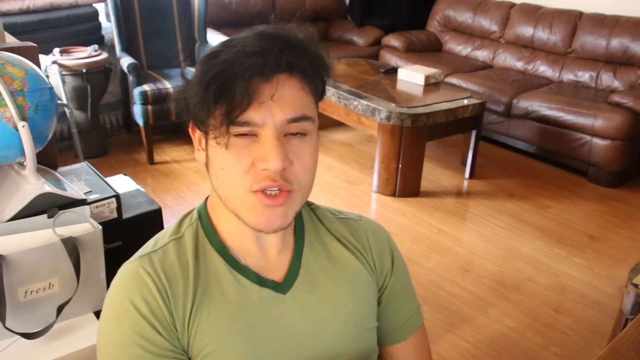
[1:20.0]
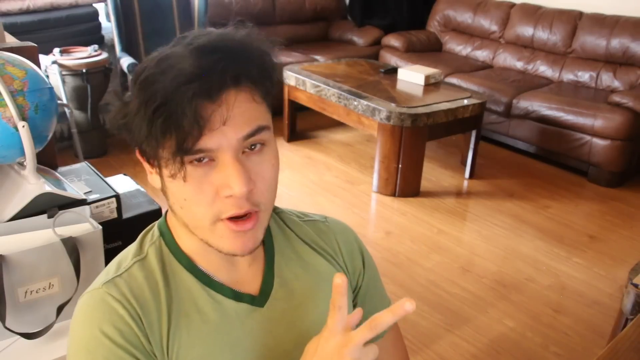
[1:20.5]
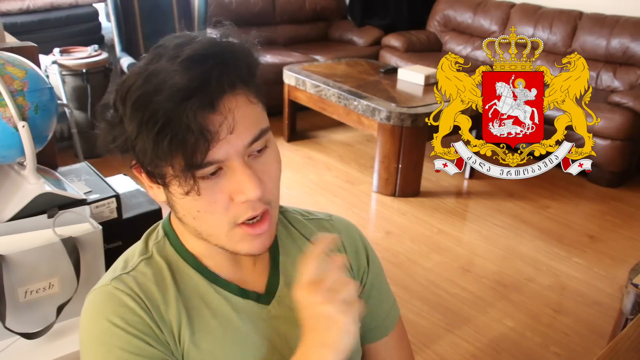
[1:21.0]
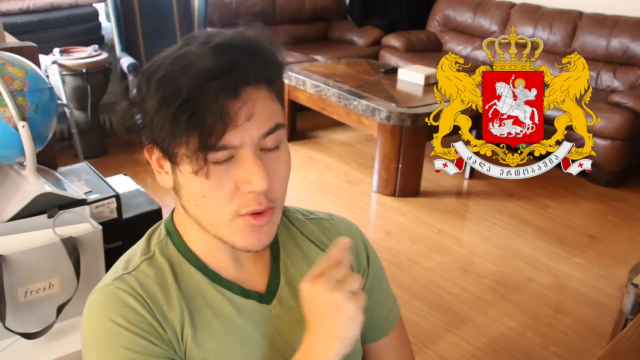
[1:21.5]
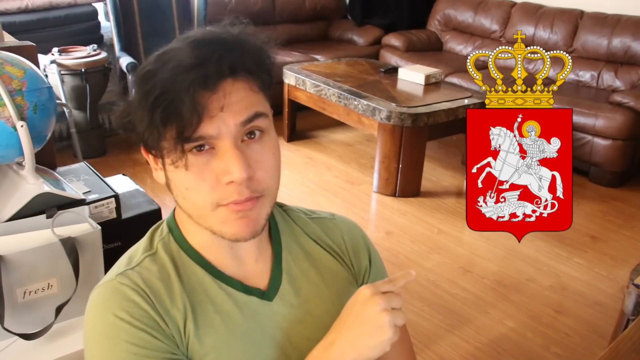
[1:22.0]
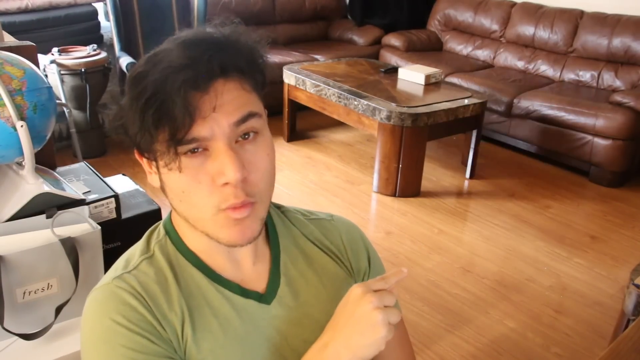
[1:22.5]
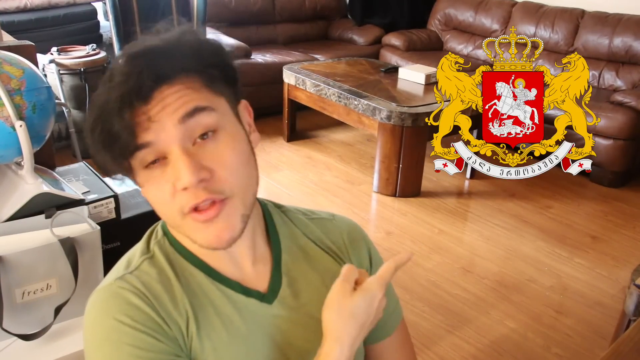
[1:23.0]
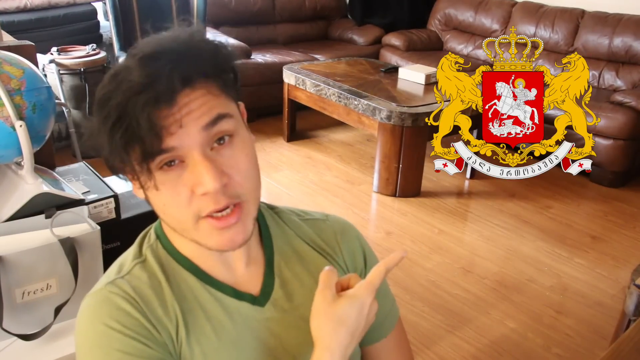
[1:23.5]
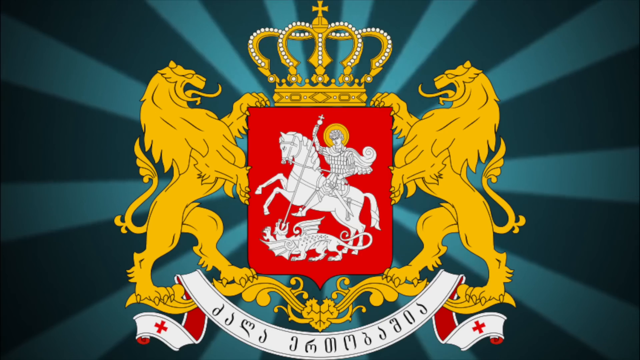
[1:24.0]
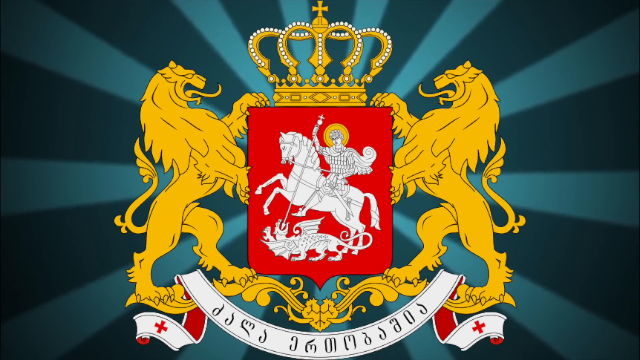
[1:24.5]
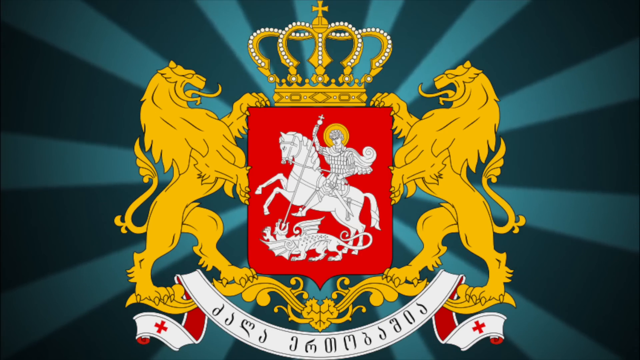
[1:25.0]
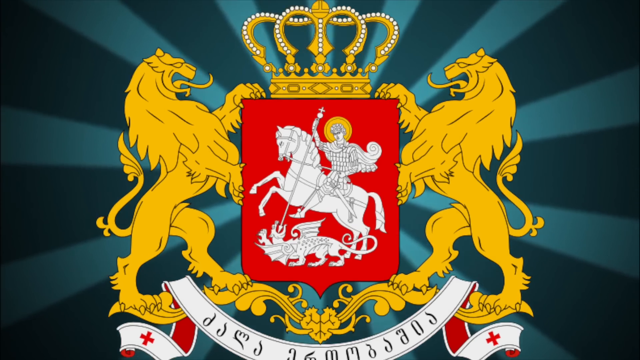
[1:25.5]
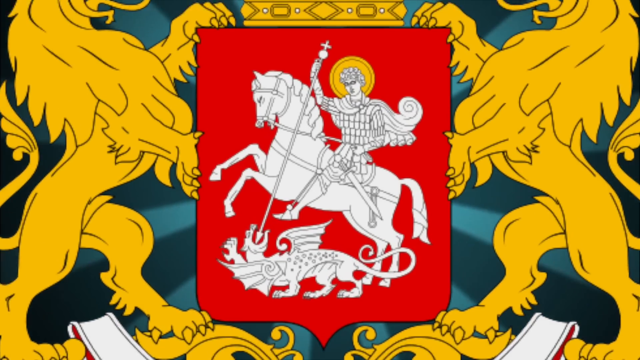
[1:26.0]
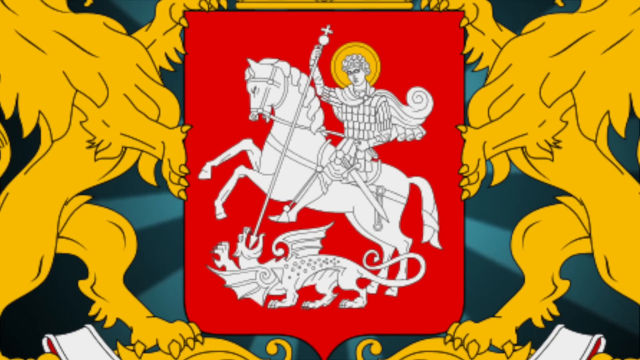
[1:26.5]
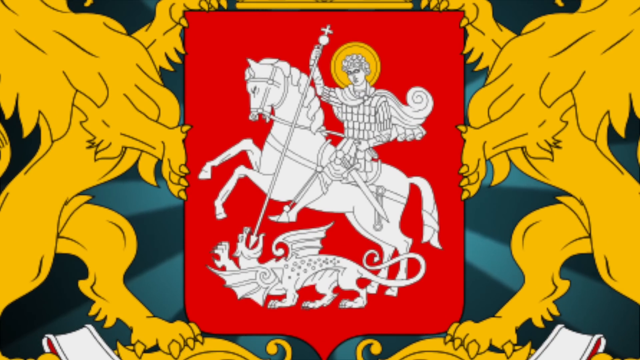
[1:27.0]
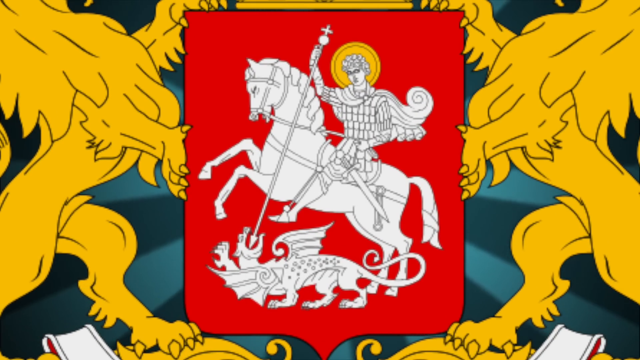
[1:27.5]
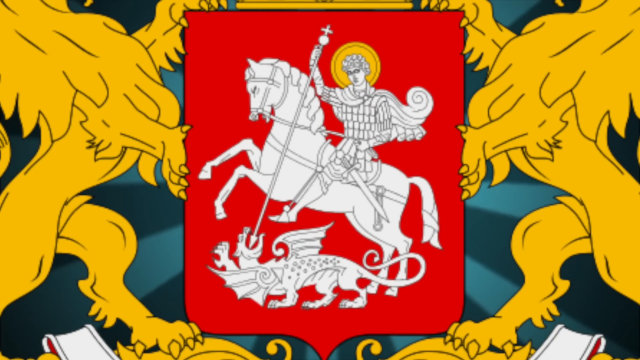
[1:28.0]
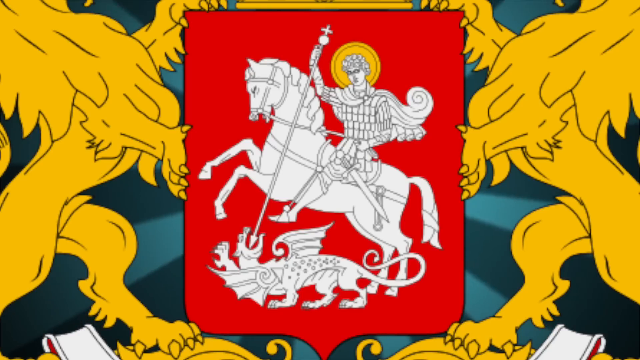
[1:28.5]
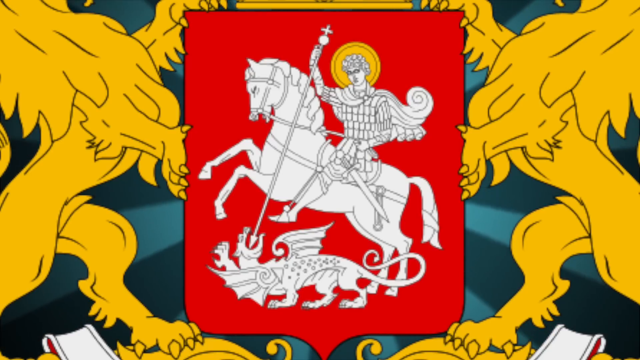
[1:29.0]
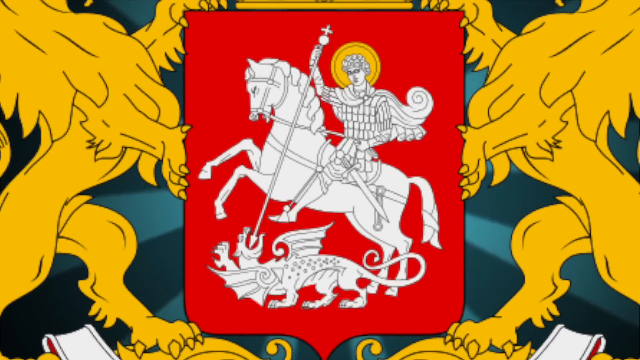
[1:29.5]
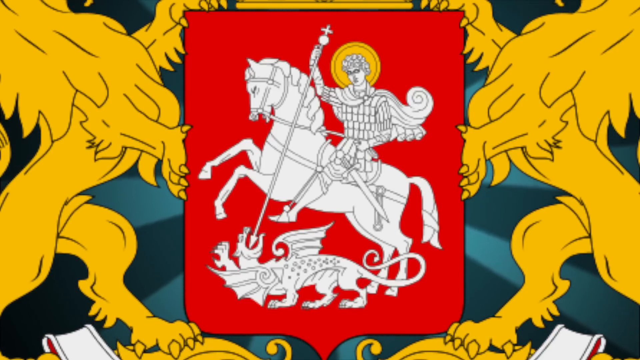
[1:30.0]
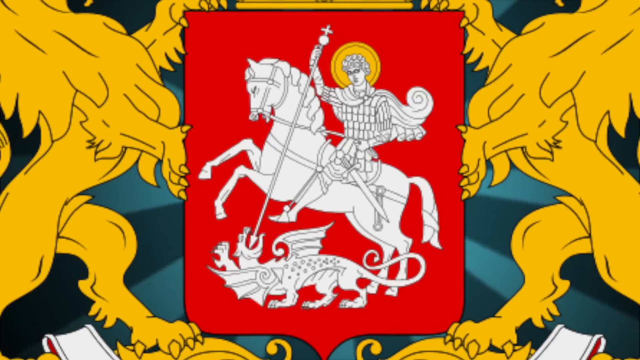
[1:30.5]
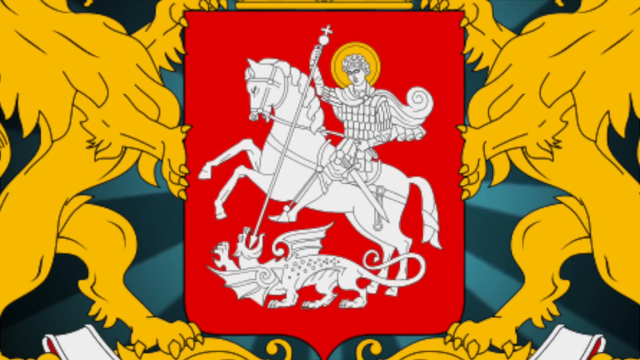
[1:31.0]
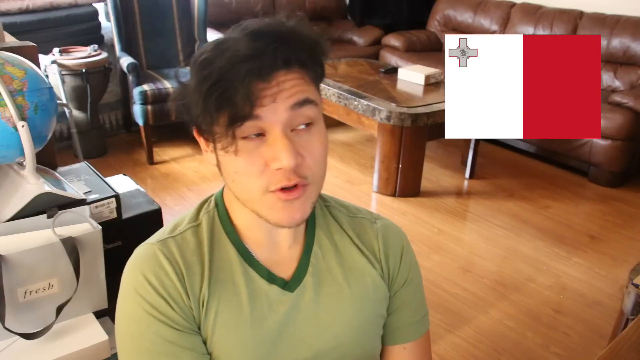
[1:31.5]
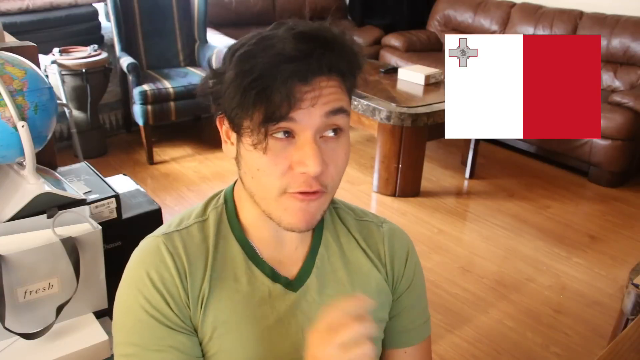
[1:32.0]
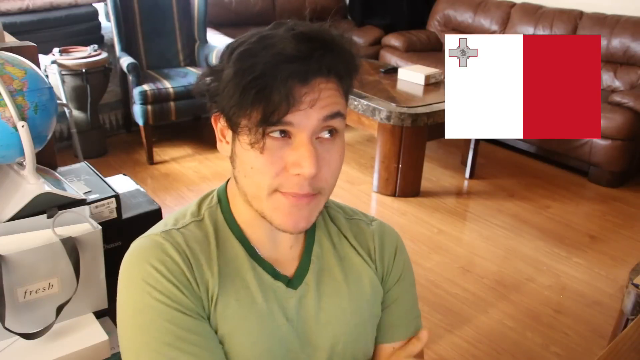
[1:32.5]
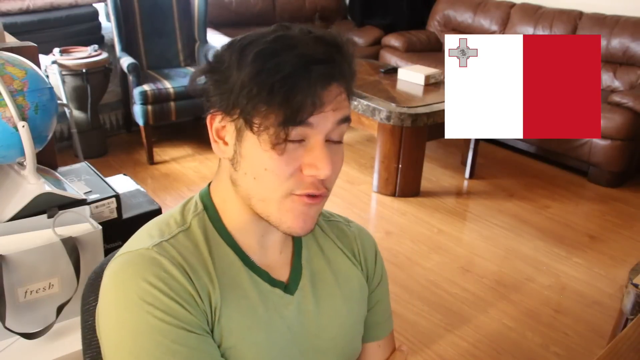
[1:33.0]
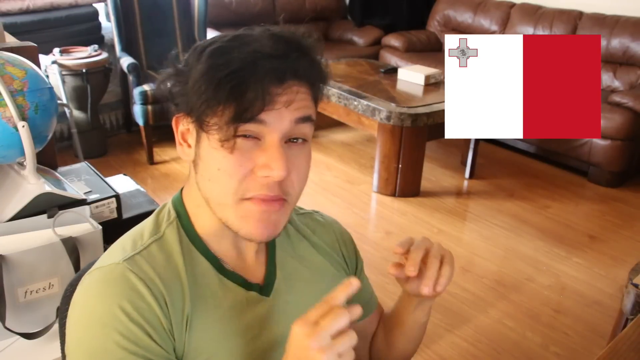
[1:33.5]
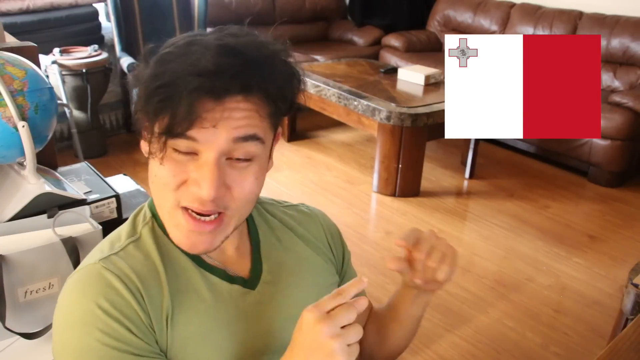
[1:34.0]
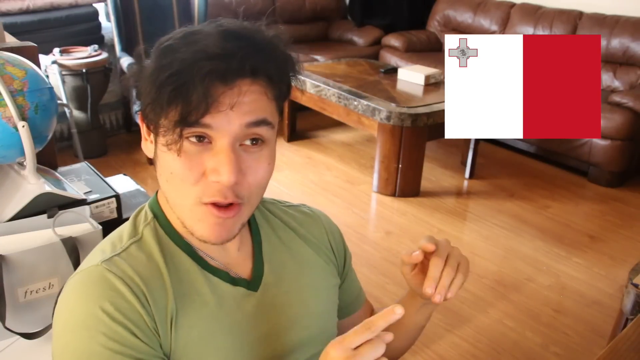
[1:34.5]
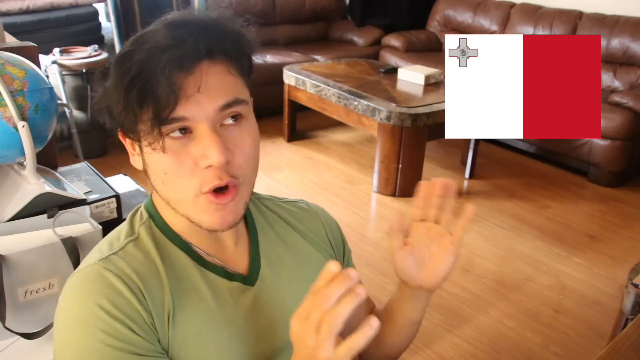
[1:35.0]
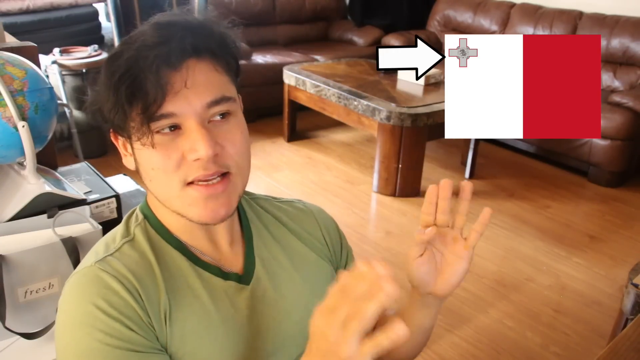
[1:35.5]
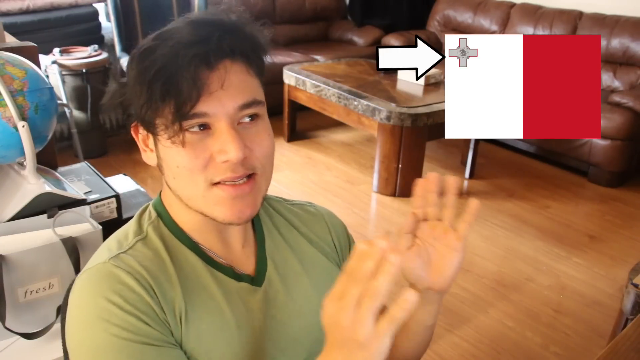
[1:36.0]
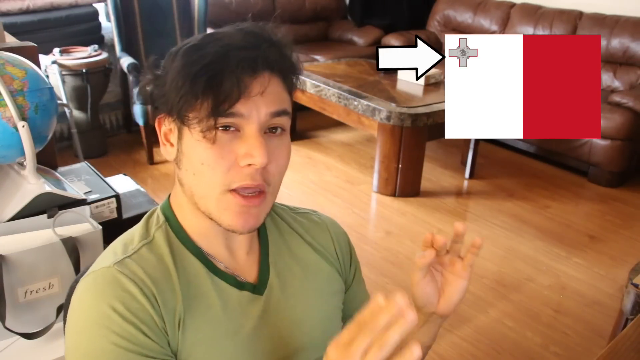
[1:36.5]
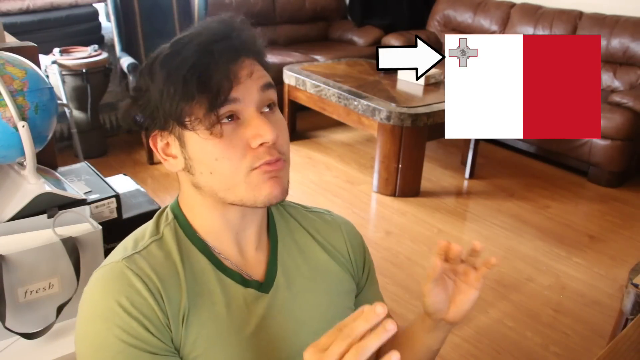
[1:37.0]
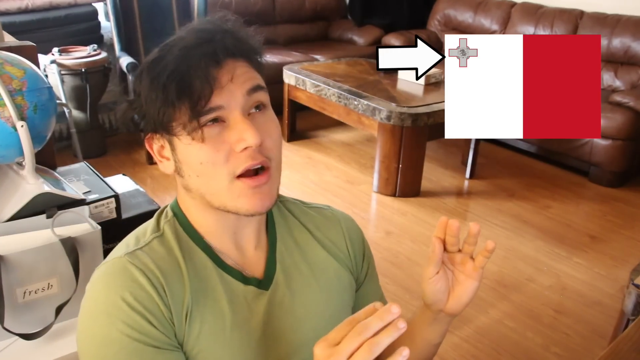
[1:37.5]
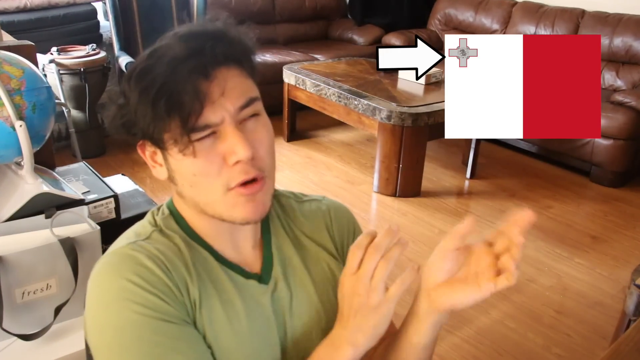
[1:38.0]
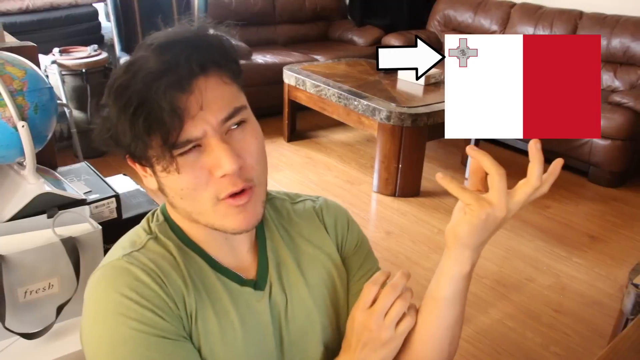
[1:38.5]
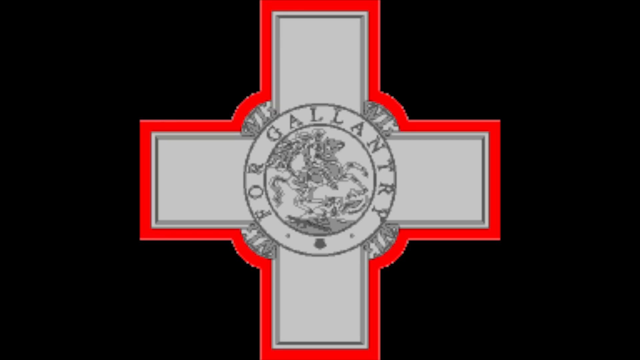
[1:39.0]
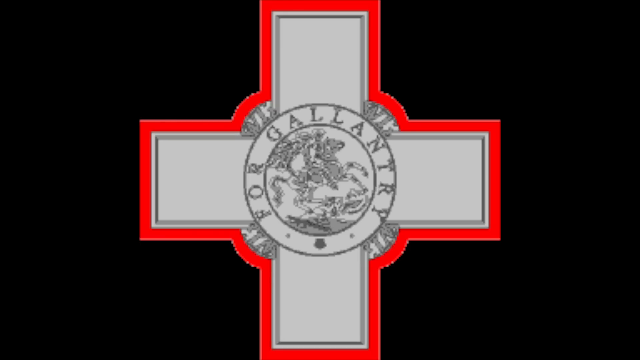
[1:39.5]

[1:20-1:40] The Asian man talks, and an emblem of two yellow lions appears; they seem to be holding what appears to be a crown, and the symbol is like those found on football clubs. The emblem is then shown full screen: between the two lions is a man riding a horse, with his arrow pointed at a dragon. The view zooms in on the man on the horse with his arrow in the dragon's mouth. The scene returns to the man talking, and a flag appears that is half red and half white, with a small cross at the top left of the white side. The man talks using hand gestures, and then another flag appears.